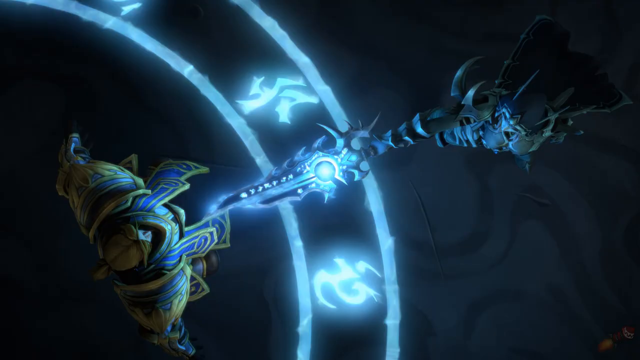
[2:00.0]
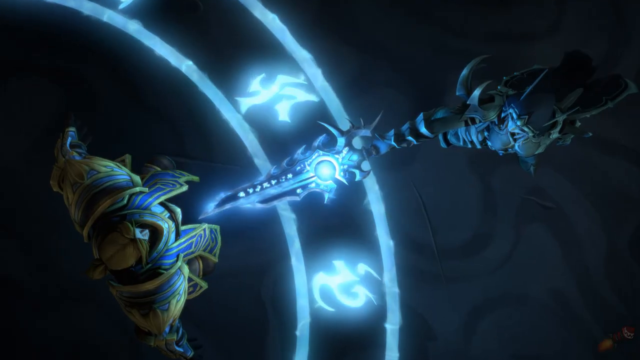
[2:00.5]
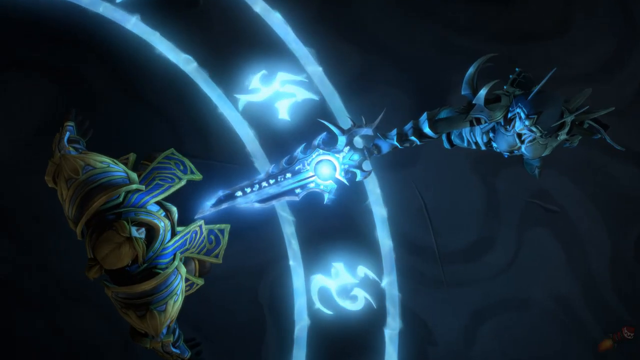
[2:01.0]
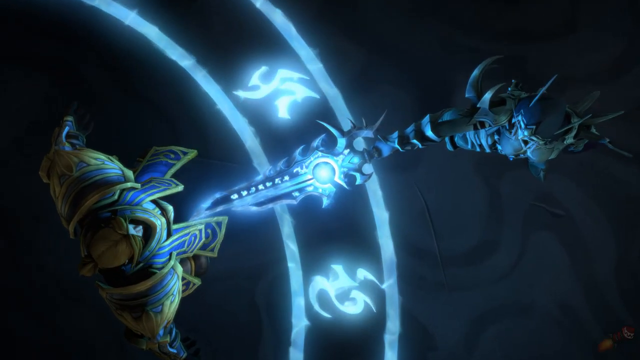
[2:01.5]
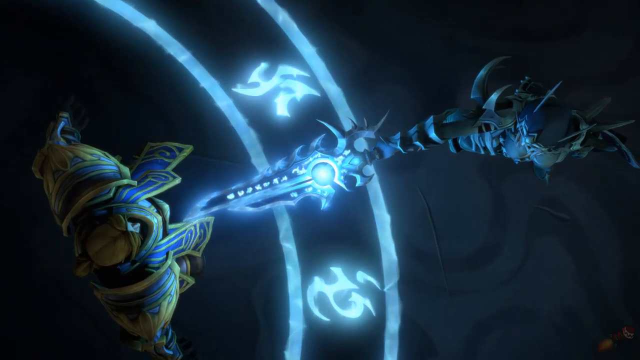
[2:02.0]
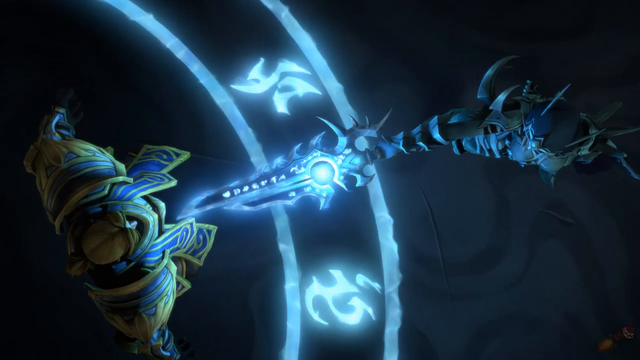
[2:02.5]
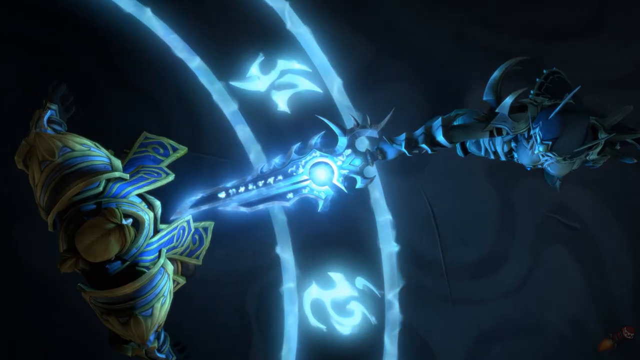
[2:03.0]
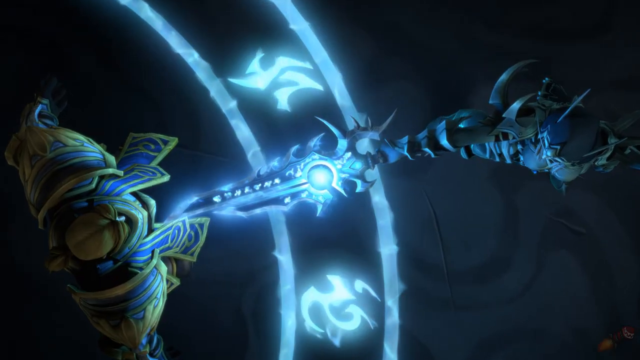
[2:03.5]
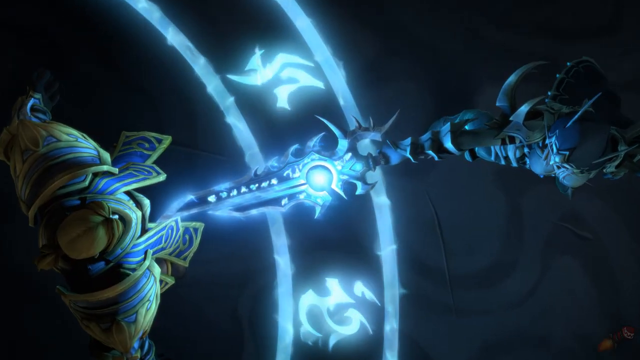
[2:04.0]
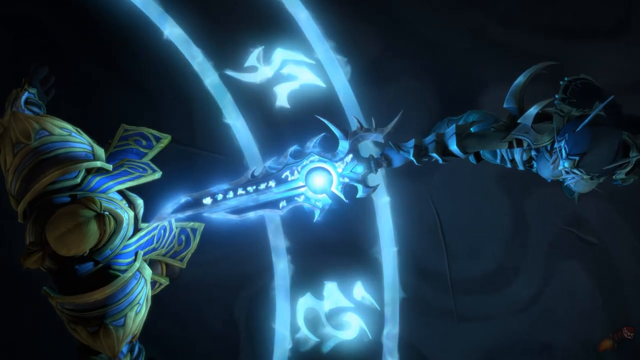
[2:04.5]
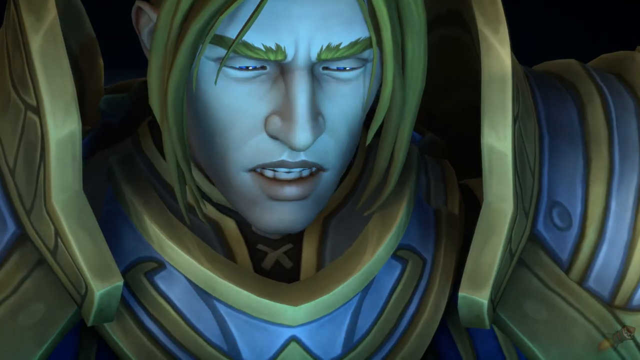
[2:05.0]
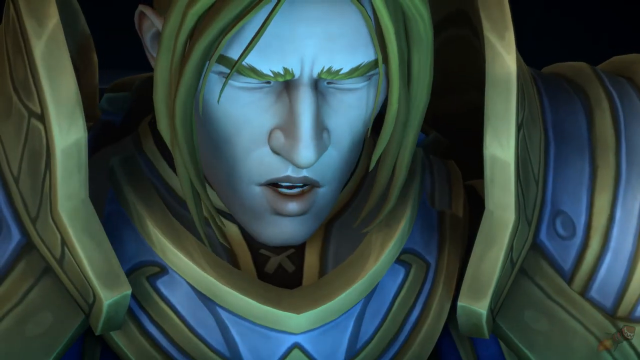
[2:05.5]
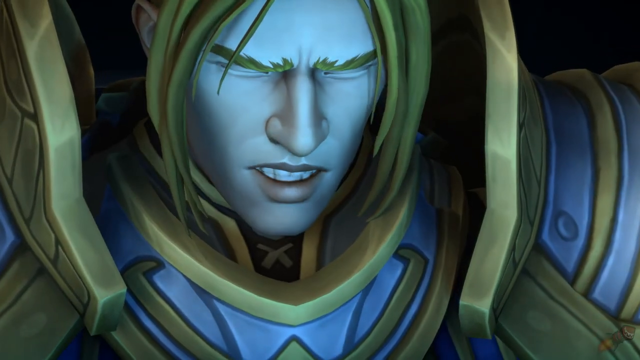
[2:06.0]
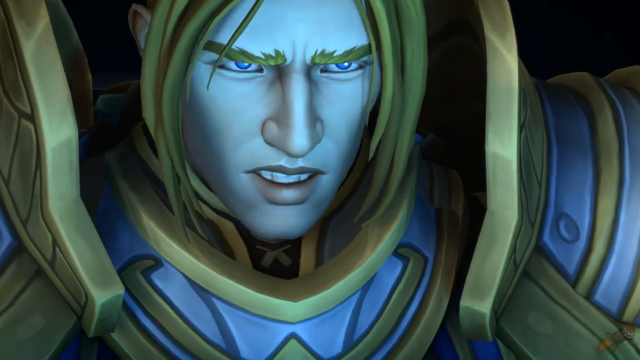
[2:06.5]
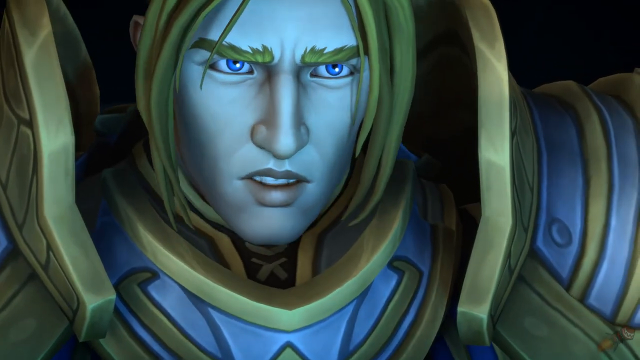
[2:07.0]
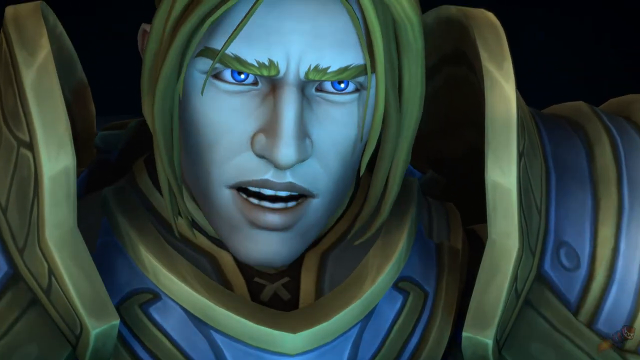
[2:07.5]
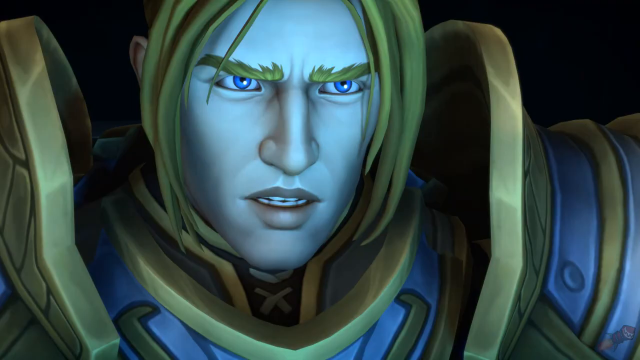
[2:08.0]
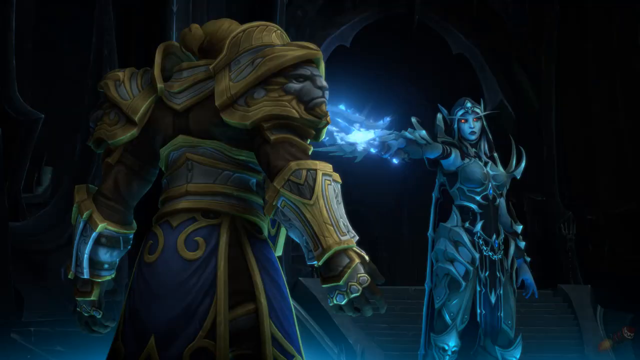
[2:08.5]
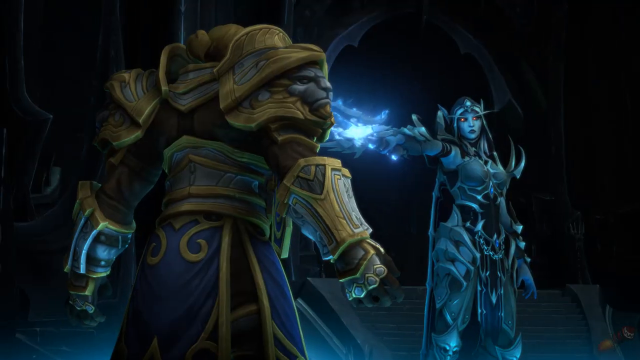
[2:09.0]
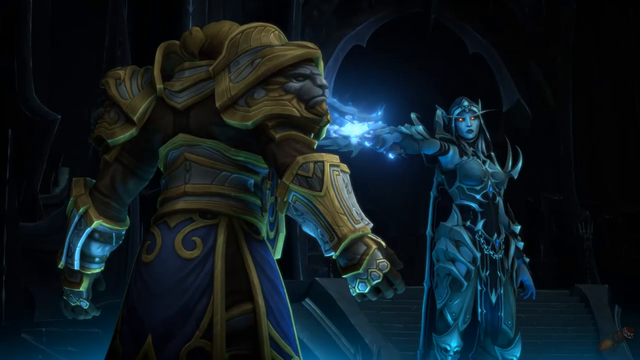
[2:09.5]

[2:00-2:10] Two characters fight one against the other, with one slashing and burning against the other, amid a lot of light that creates special lighting.